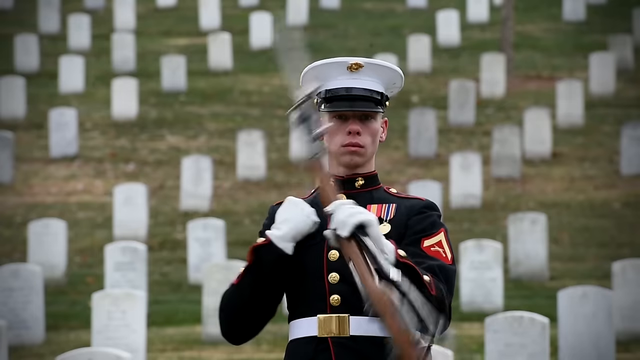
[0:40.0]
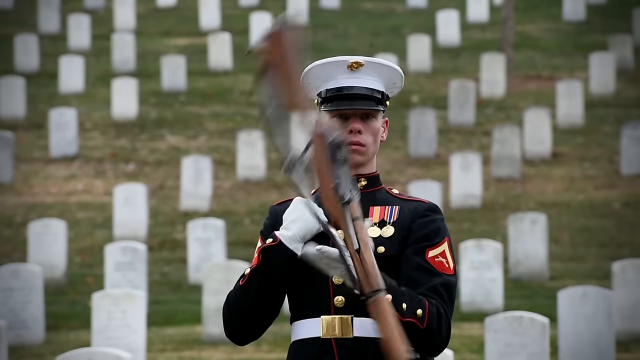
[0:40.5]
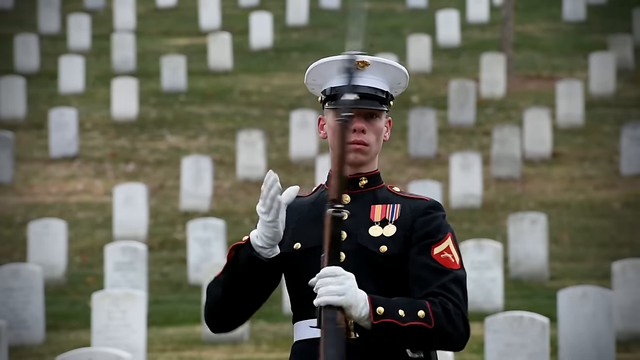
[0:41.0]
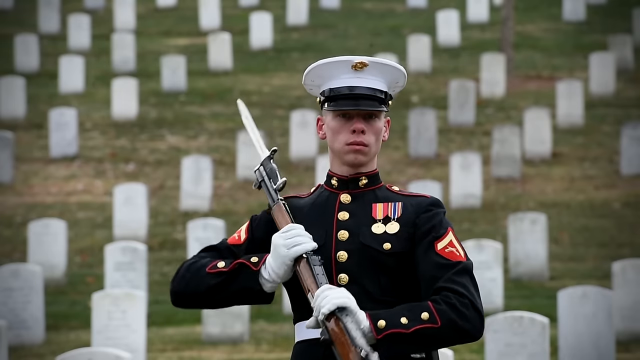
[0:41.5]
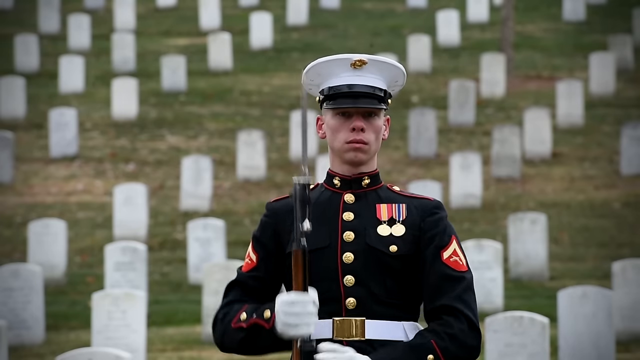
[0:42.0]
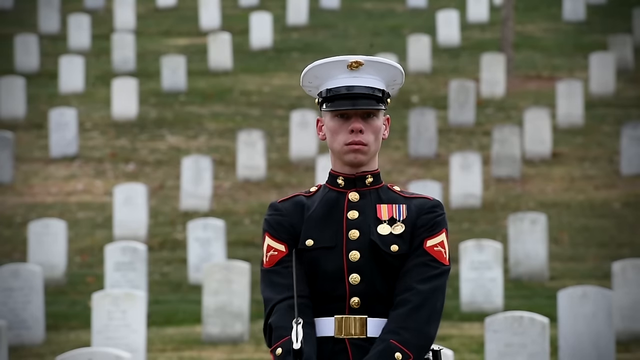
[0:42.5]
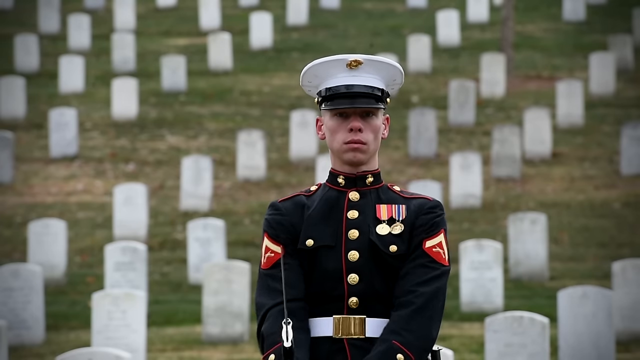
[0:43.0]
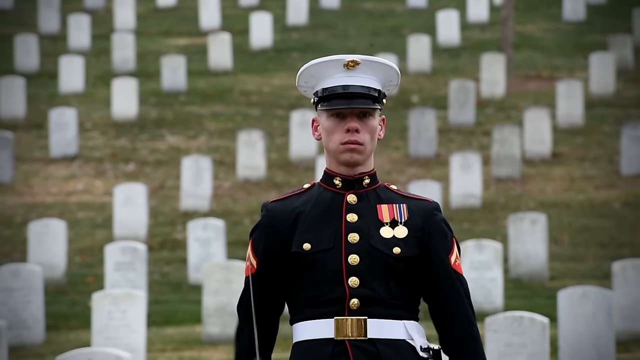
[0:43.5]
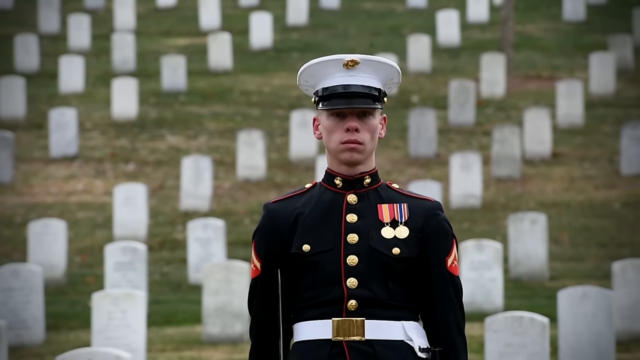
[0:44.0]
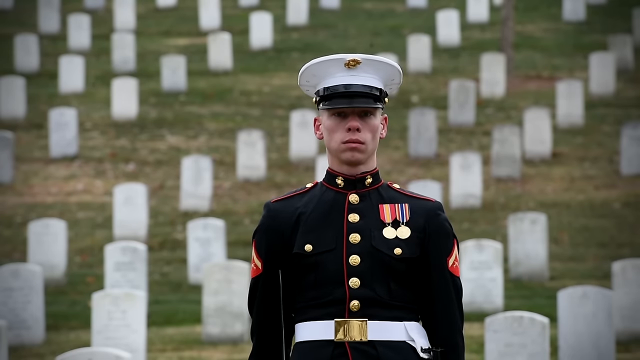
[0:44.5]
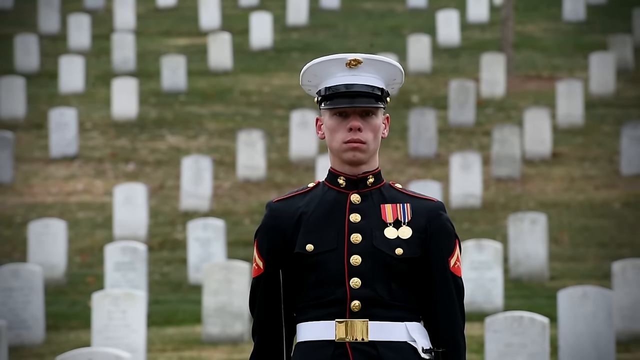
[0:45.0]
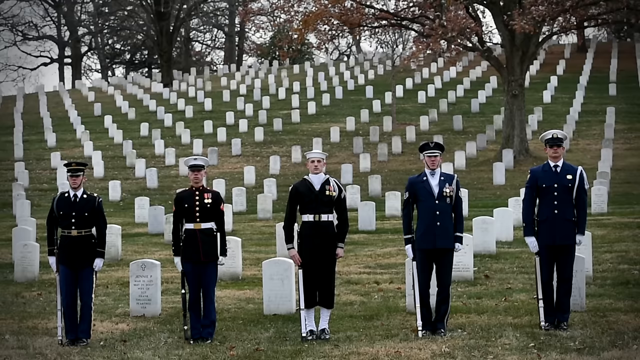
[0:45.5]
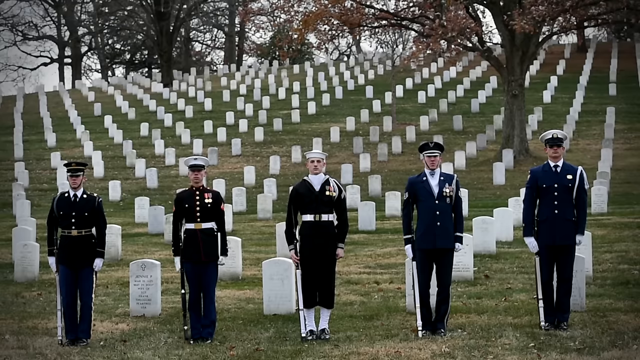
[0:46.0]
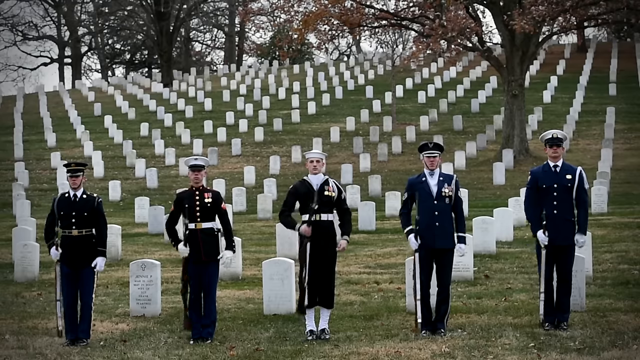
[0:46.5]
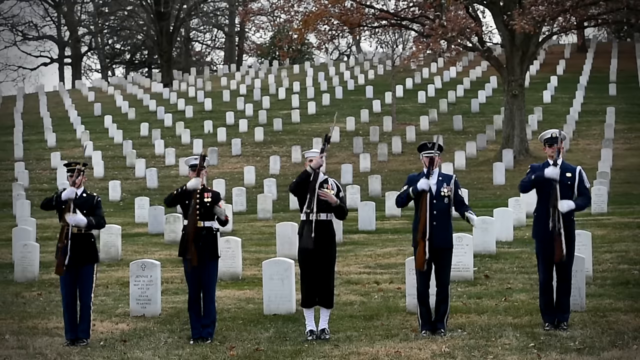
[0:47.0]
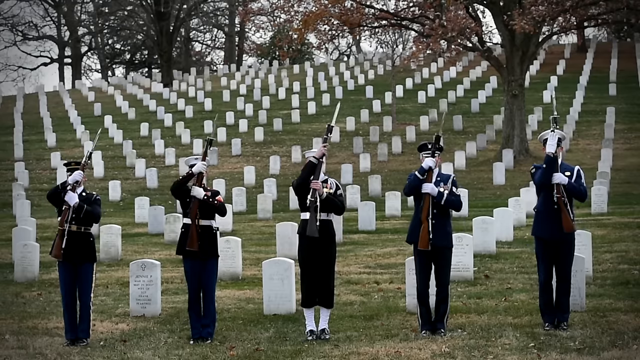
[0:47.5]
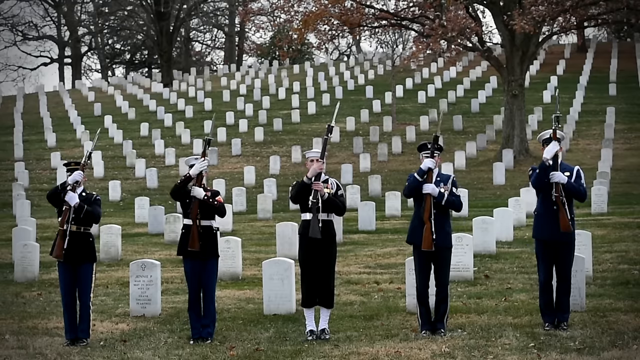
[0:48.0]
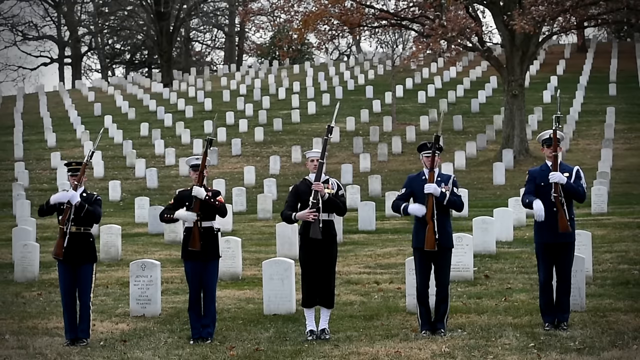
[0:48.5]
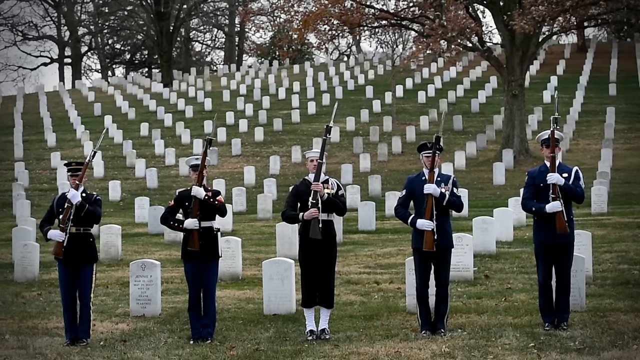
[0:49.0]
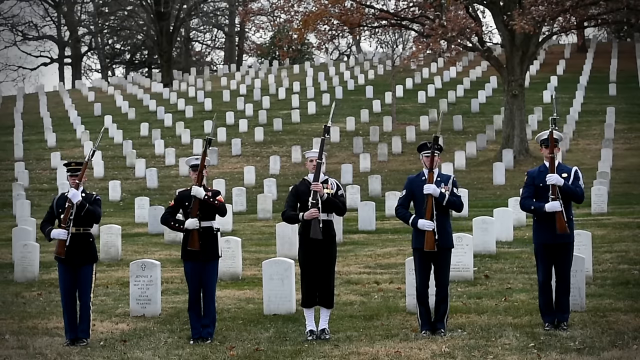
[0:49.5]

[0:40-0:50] Soldiers show their skills with their rifles, spinning them, throwing them, and catching them.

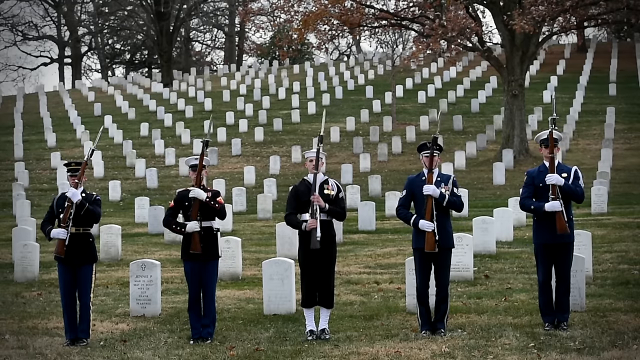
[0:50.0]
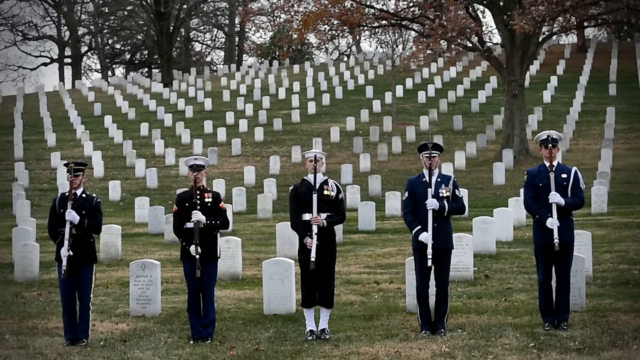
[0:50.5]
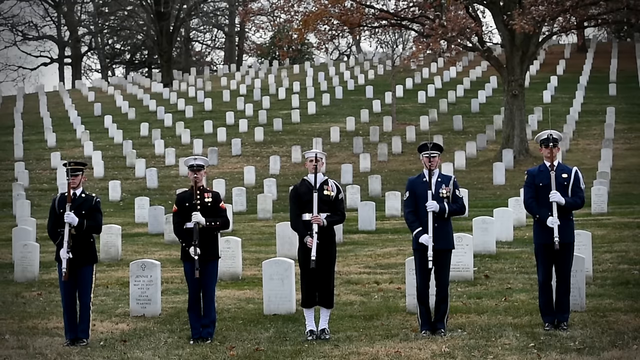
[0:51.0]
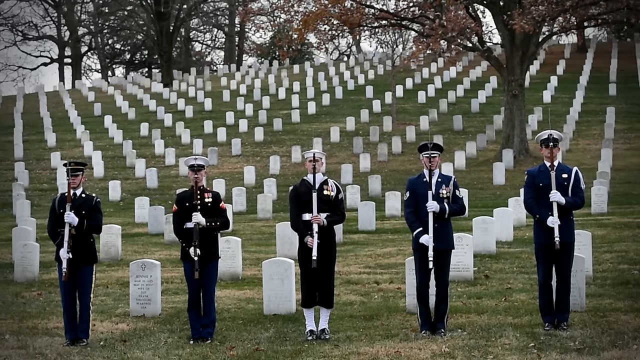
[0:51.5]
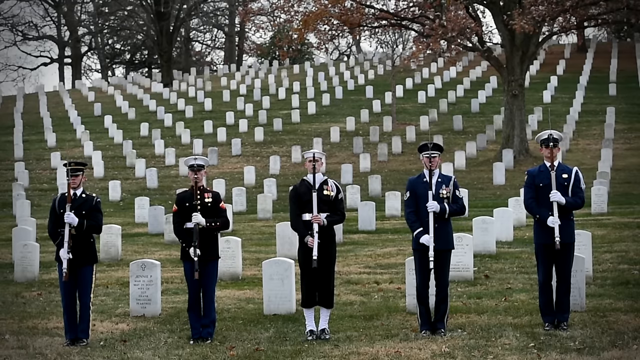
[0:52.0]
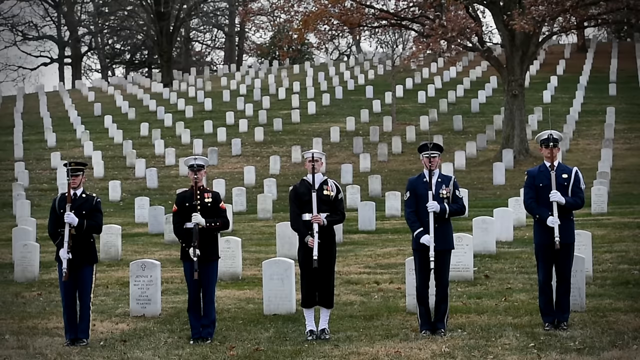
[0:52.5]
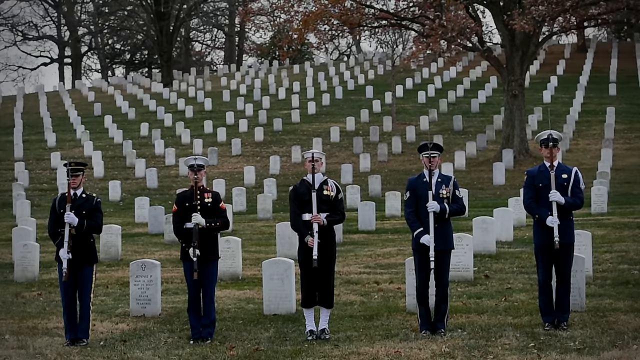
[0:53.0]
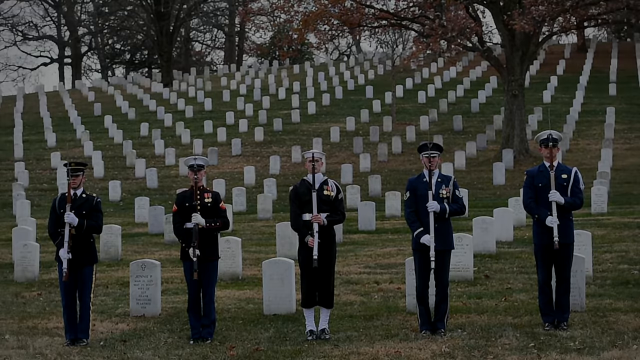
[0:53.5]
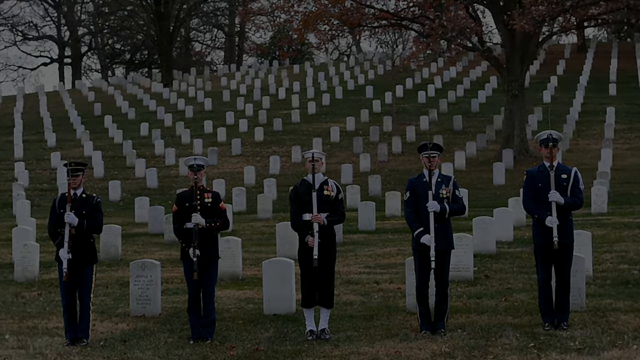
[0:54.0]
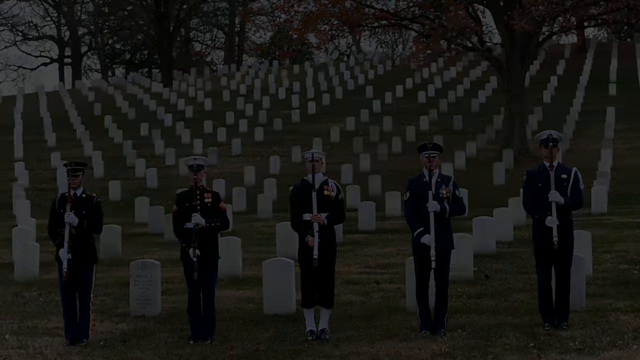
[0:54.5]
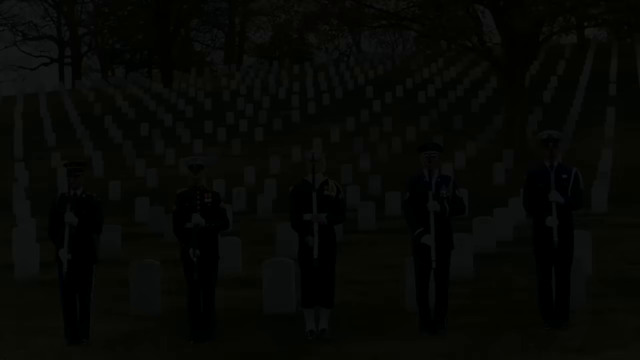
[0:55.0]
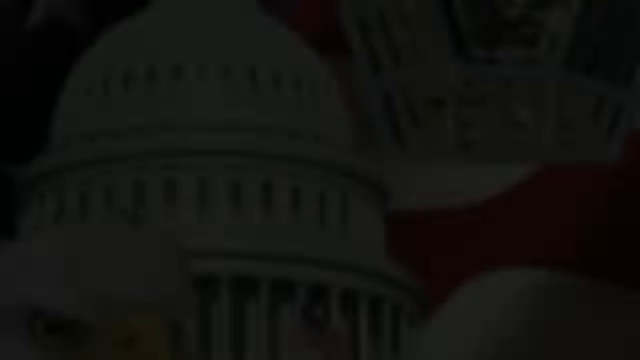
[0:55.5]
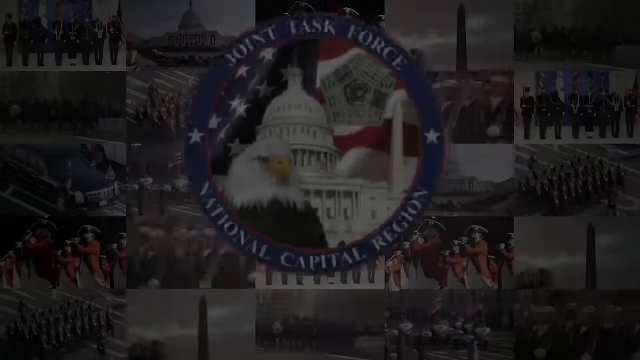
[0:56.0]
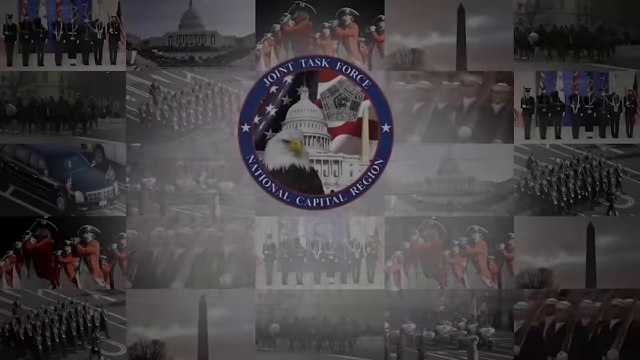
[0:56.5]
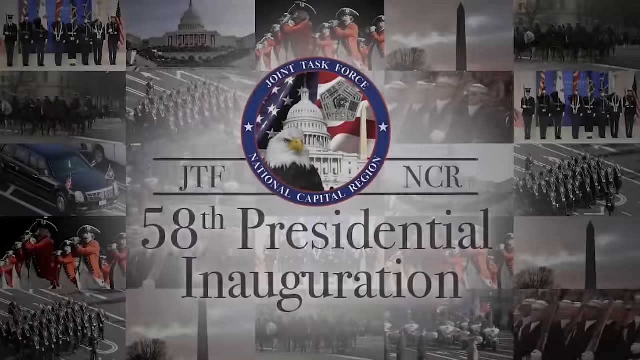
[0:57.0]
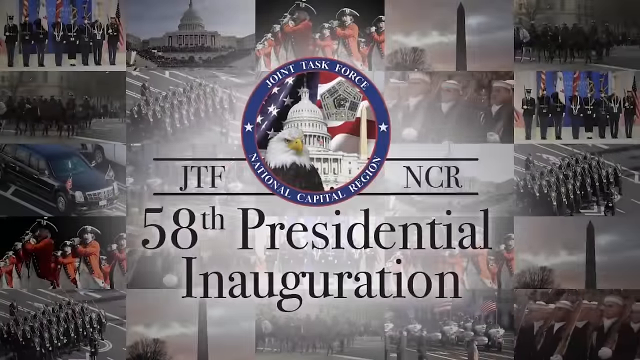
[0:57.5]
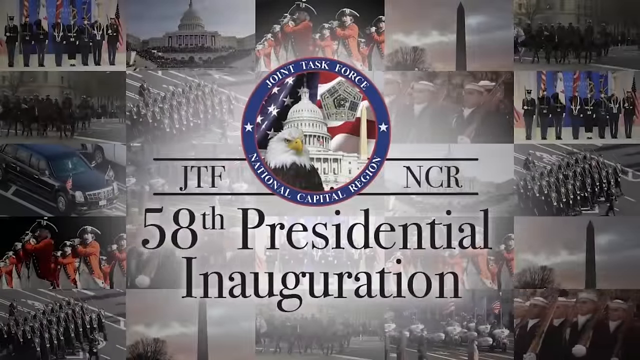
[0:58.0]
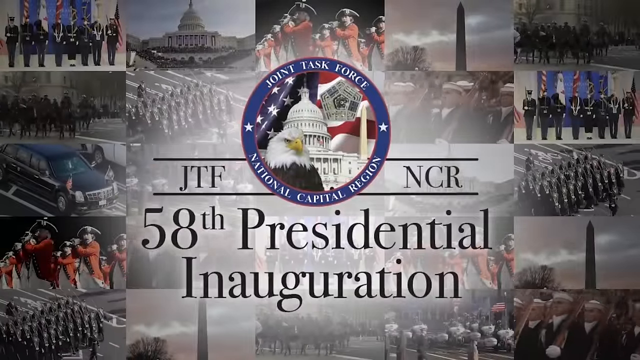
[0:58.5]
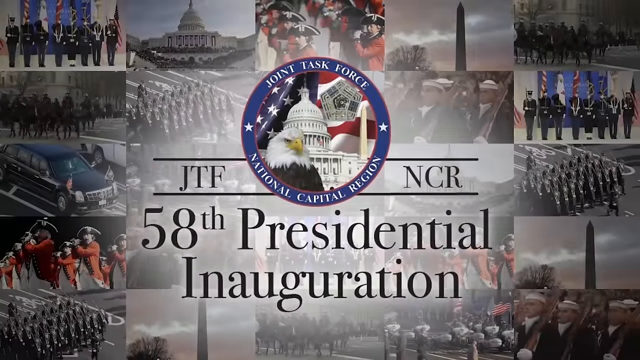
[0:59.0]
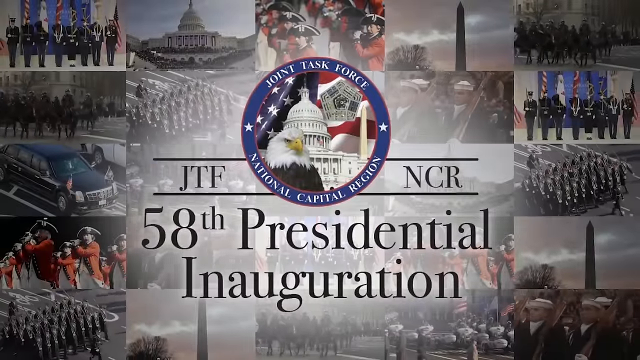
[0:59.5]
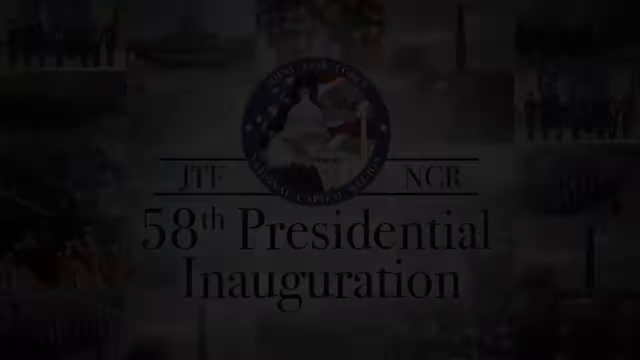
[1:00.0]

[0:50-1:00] Soldiers show their skills with the arms they are carrying. The theme is the 58th Presidential Inauguration, connected with JTF-MCR 58 Presidential Inaugurations.